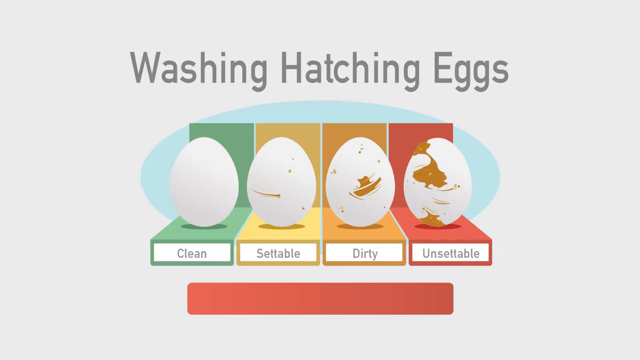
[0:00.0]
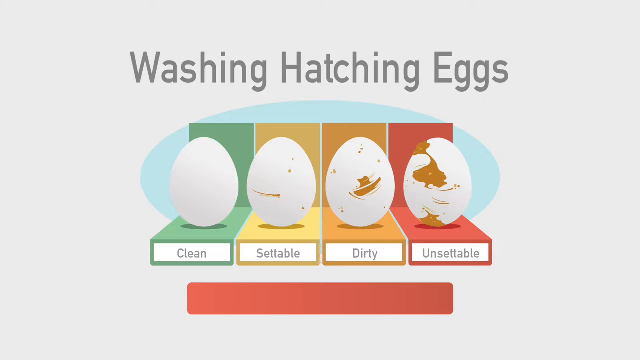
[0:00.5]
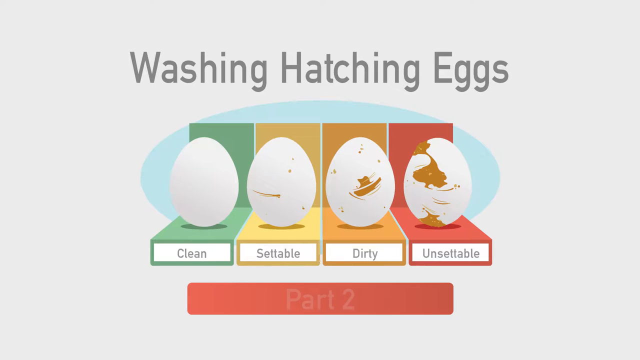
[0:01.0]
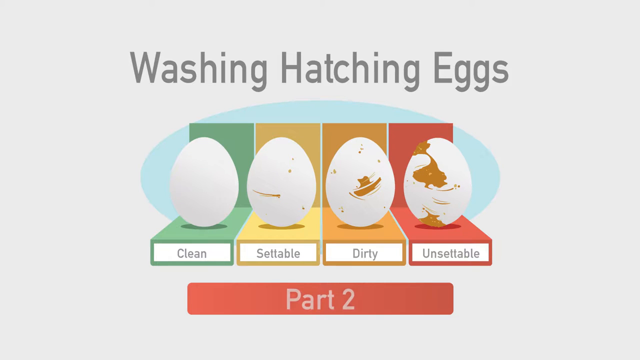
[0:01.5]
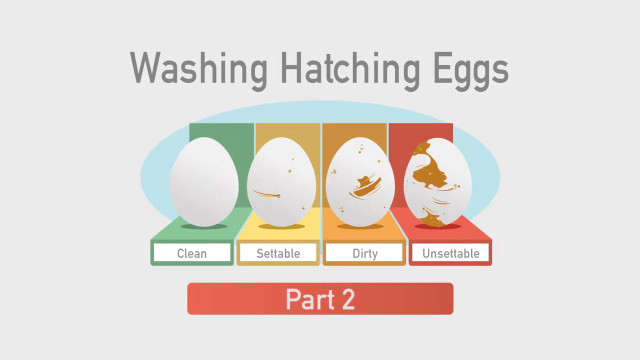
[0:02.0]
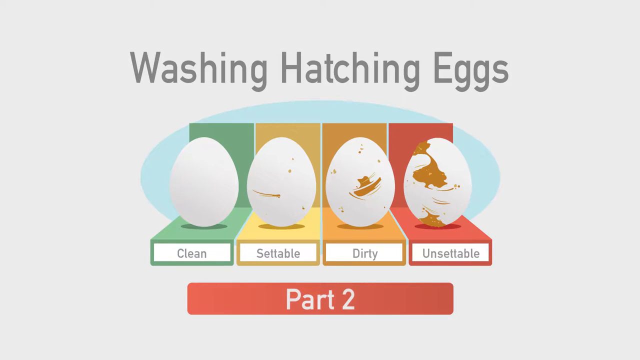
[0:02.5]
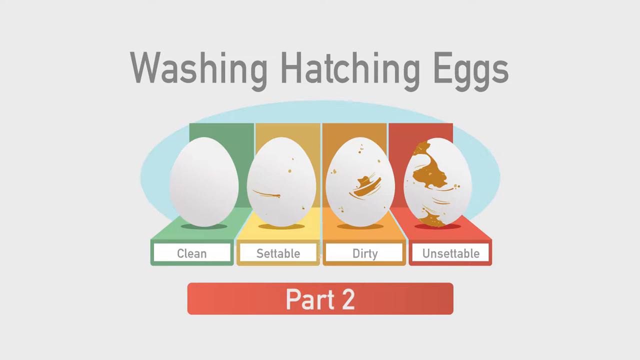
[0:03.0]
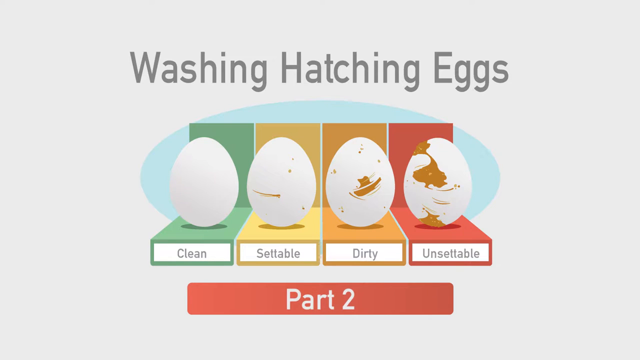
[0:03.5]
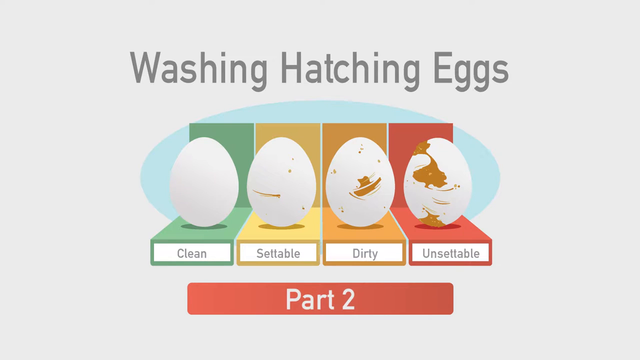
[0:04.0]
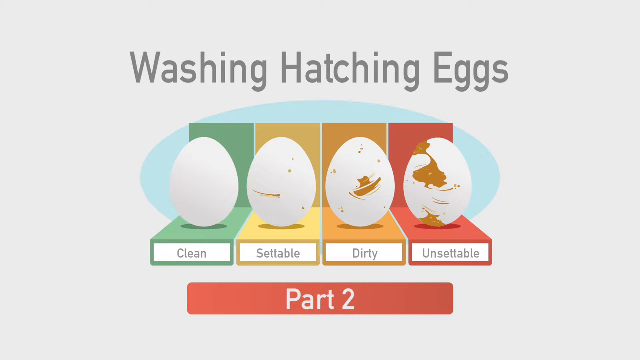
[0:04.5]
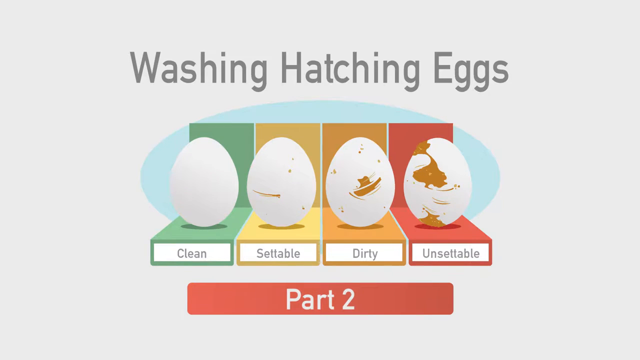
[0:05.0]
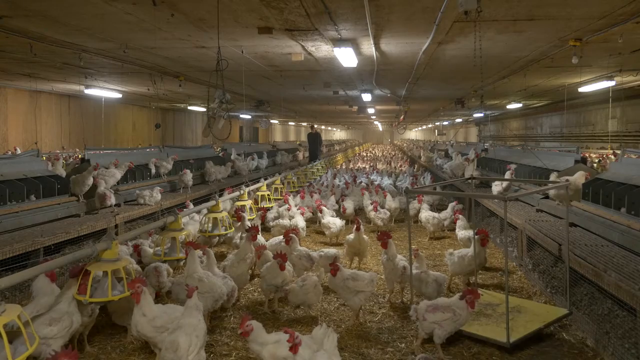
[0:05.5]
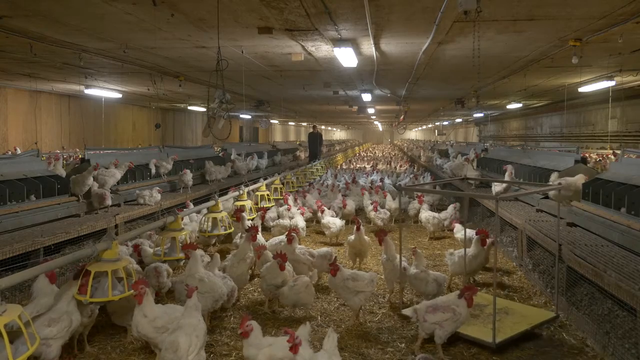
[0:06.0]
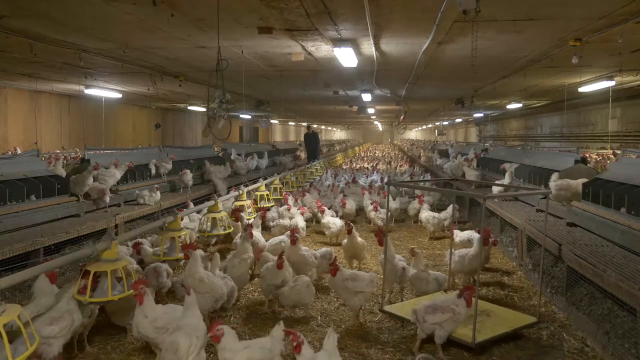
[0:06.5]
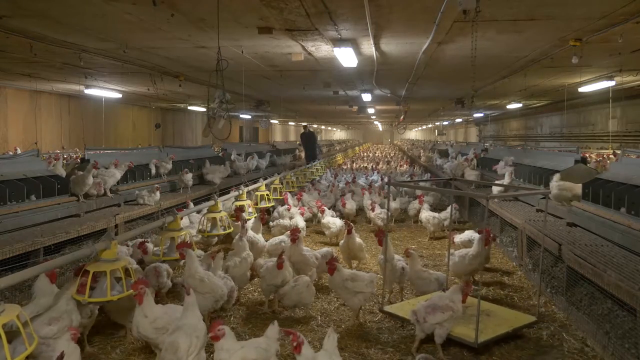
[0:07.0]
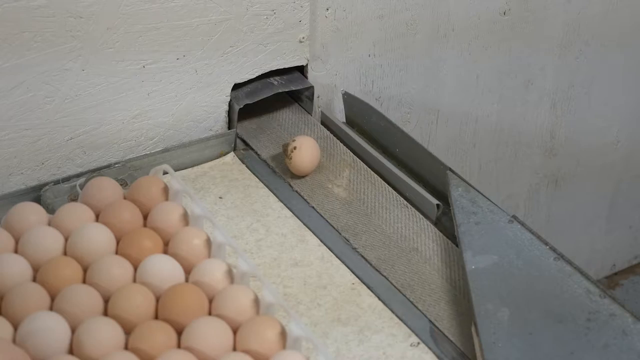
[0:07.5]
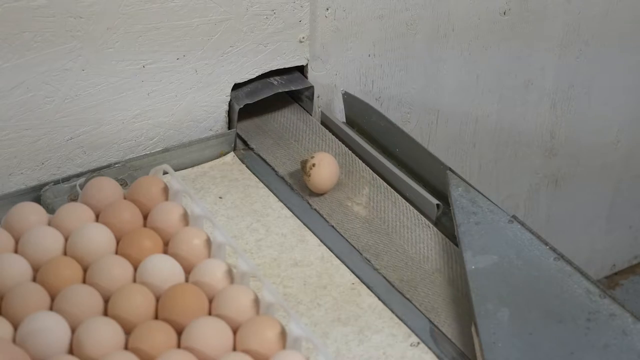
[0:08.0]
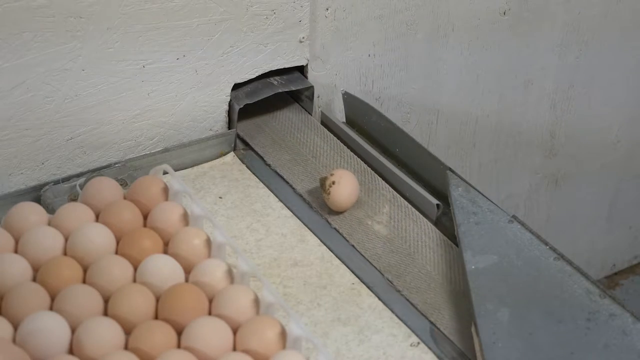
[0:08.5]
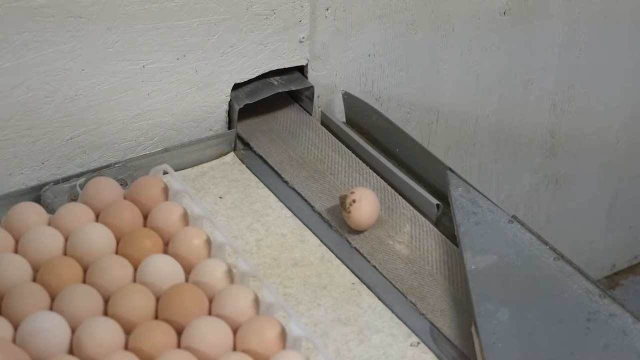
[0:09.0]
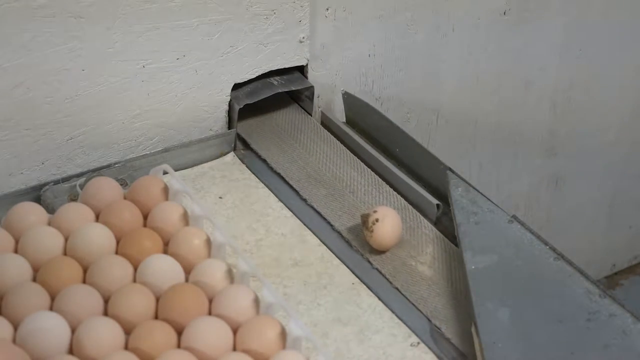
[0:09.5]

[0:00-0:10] Gray lettering in the center of an off-white background reads "washing hatching eggs." Four eggs are in the center. The first egg has a white banner with a green box underneath and reads "clean." The next has yellow underneath it with black lettering in front reading "settable." The next has an orange lining underneath, with black lettering reading "dirty." The last has a reddish box underneath and black lettering reading "unsettable." Beneath that is an orange square box that says "part two." The scene then shows a hen house with a brown ceiling, white lights, off-white walls, and white and red haired chickens.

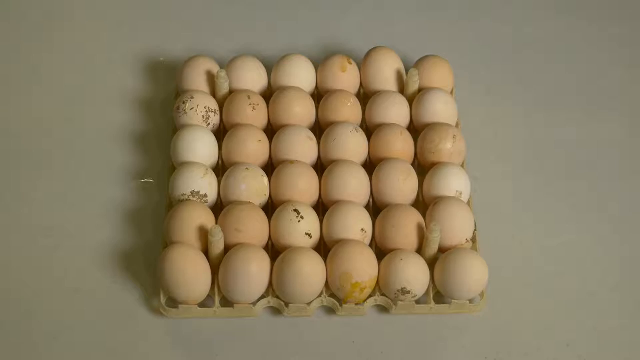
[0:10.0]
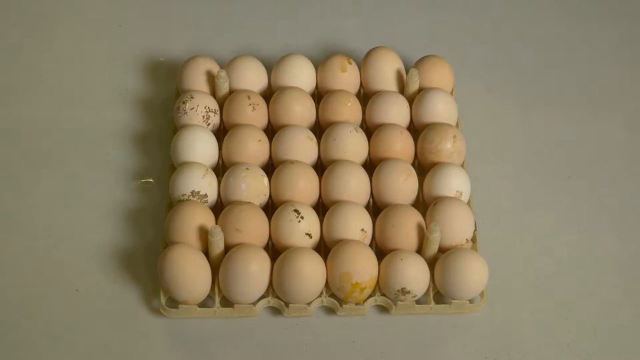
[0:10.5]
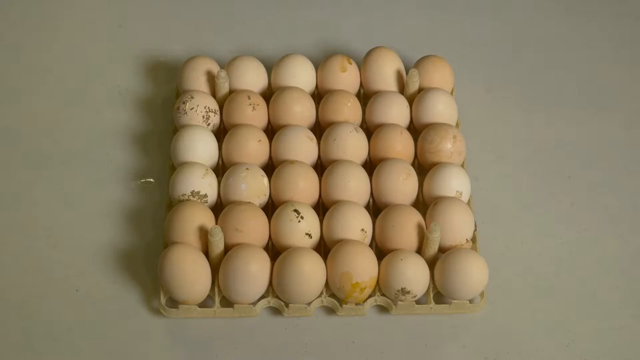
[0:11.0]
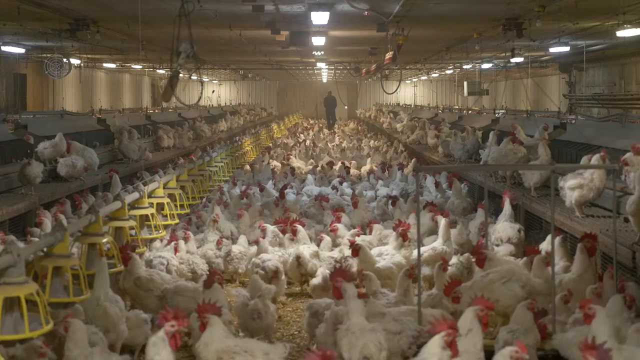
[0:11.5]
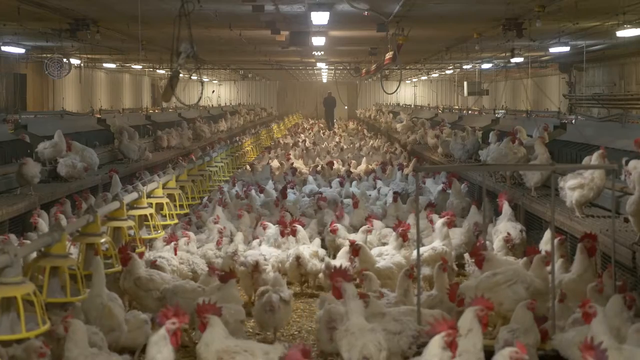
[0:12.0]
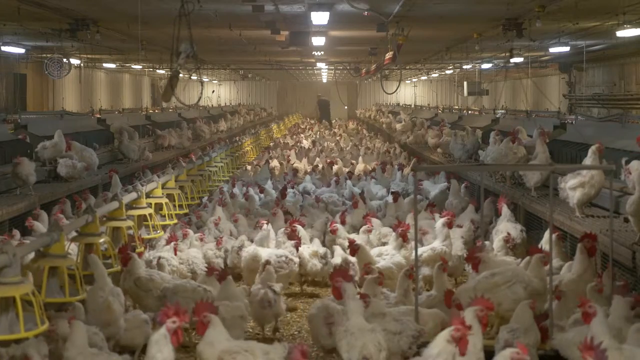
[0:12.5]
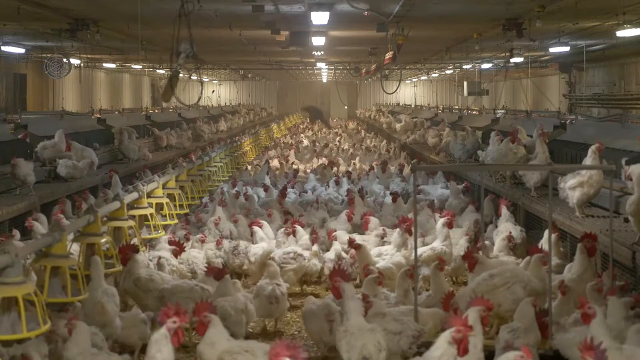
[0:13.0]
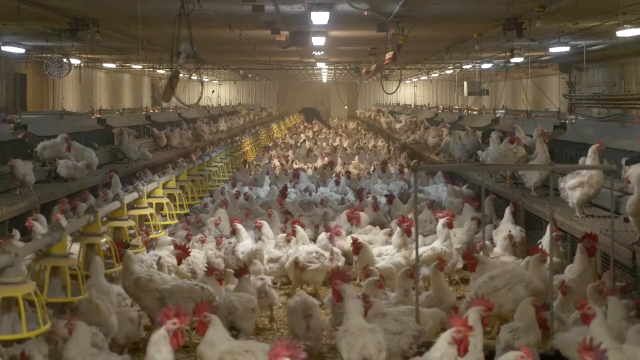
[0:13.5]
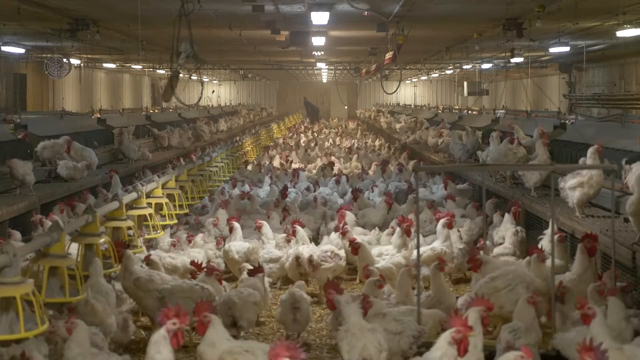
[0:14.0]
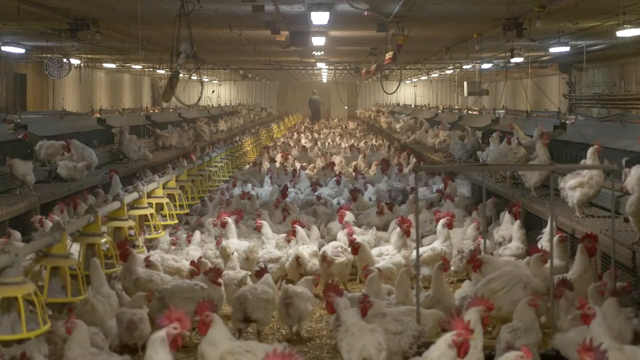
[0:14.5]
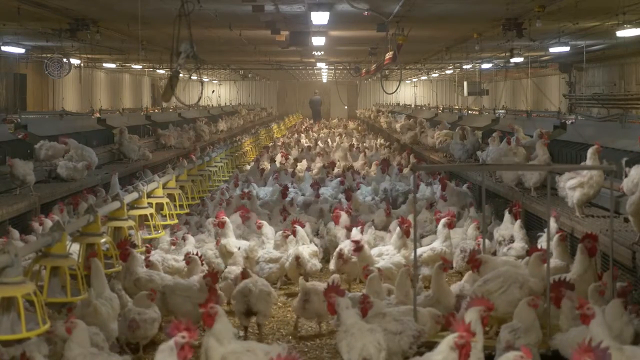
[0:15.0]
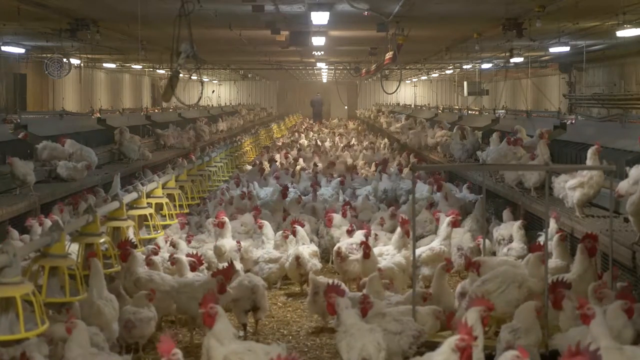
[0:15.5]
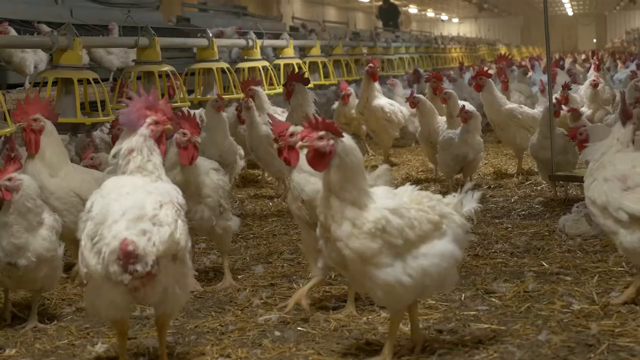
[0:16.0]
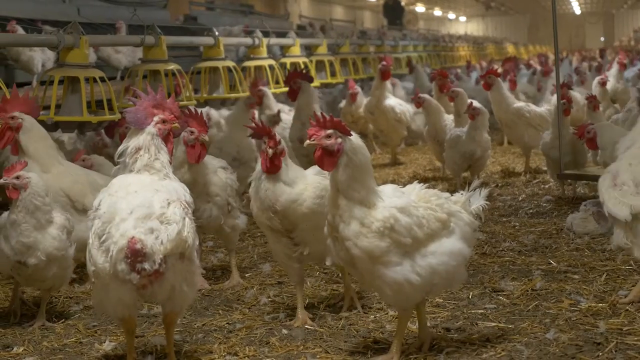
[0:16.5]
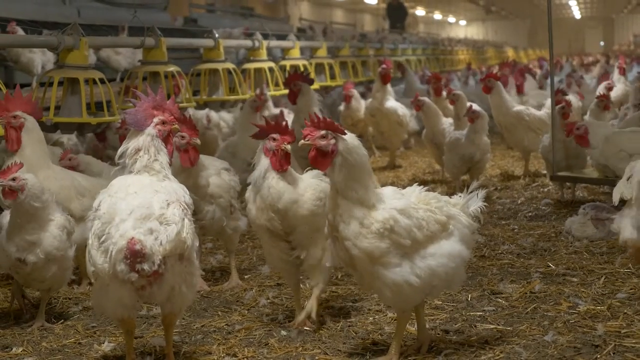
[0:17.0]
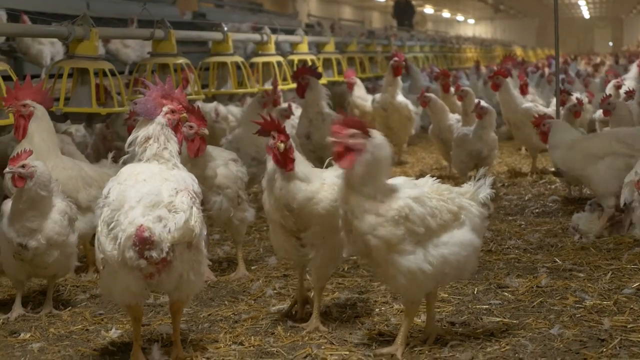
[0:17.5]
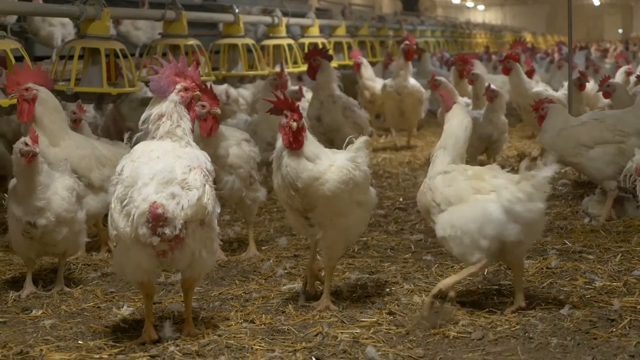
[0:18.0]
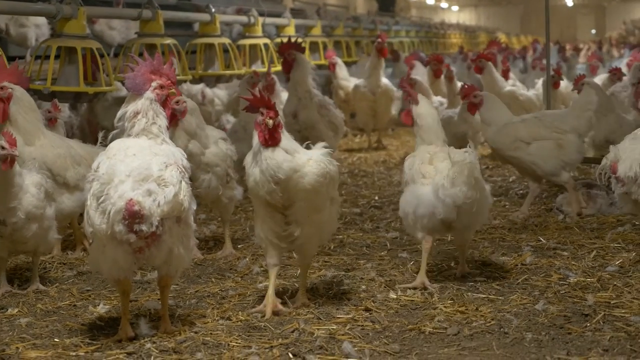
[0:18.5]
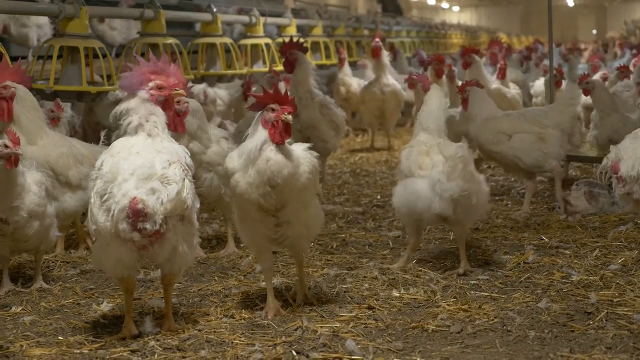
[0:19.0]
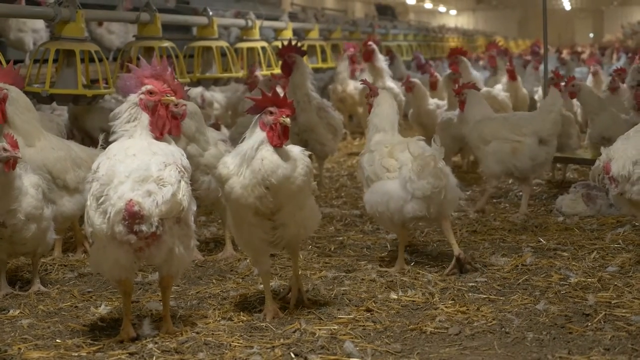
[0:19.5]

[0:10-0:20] A light brown stack of eggs is shown, about six per row in six rows, on a table that looks light gray. A chicken coop is filled with white chickens with red feathers. White lighting is up at the top in three rows: left, right and center. Yellow baskets for feeding are on the left side, and there are gray upper levels, two on the left and two on the right. The whole bottom area is filled with chickens, and the ground is covered in brown hay. The chickens are seen up close, walking around.